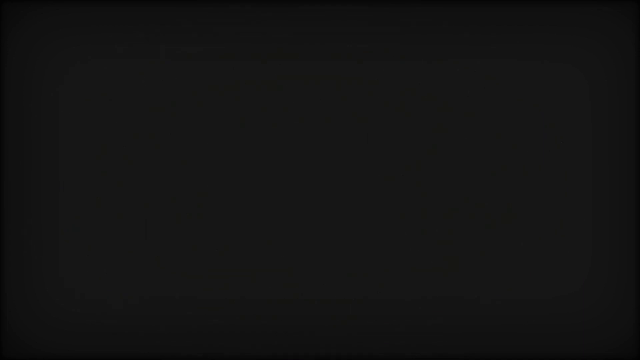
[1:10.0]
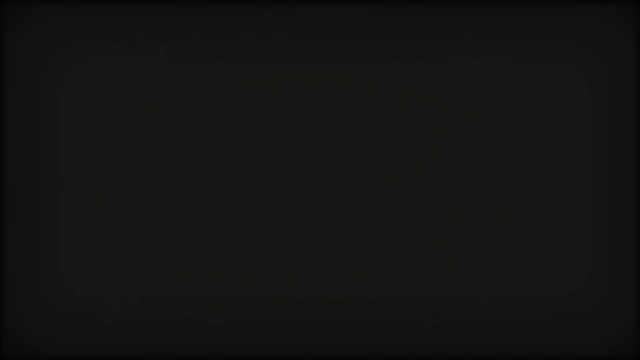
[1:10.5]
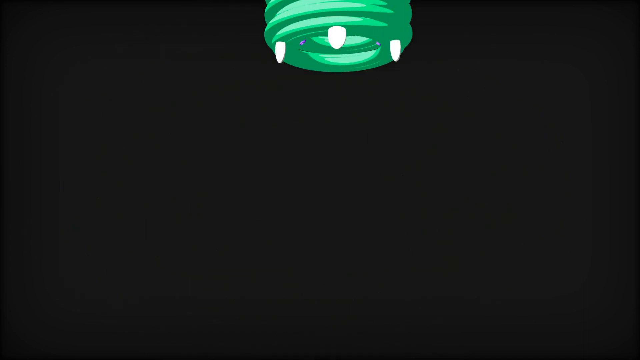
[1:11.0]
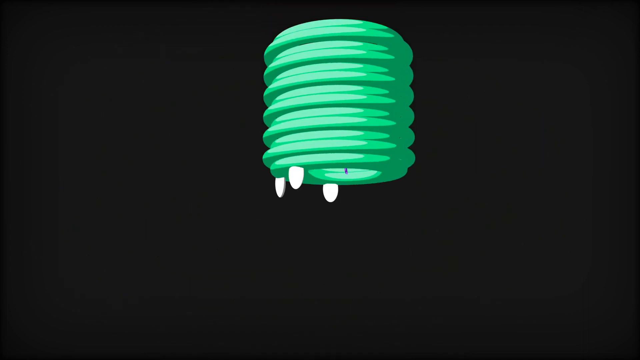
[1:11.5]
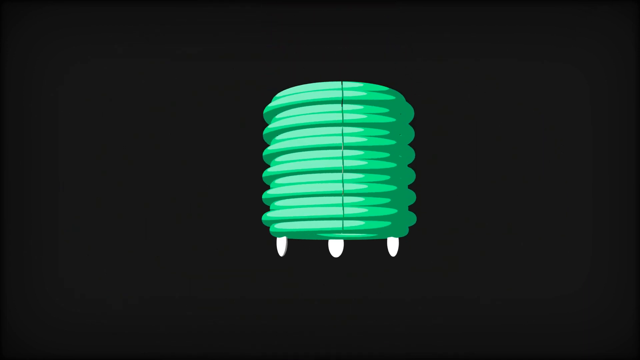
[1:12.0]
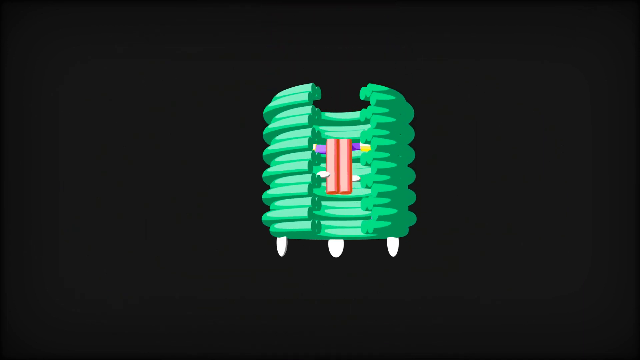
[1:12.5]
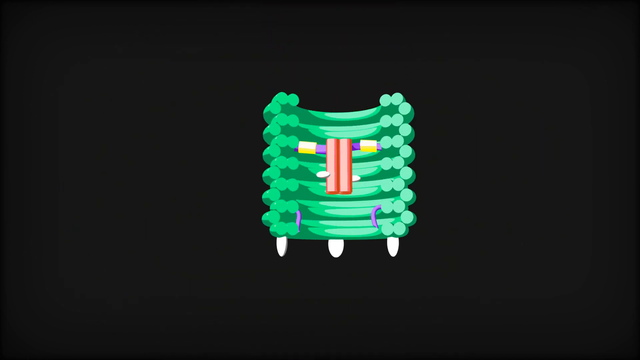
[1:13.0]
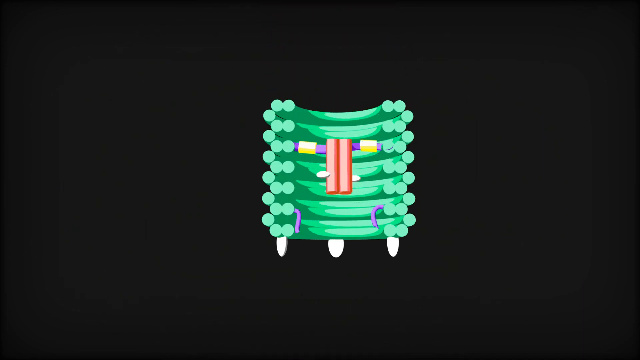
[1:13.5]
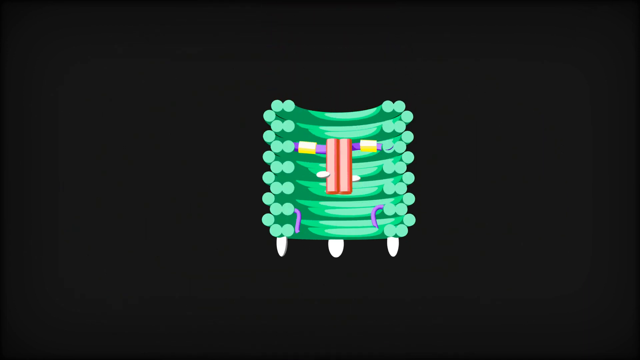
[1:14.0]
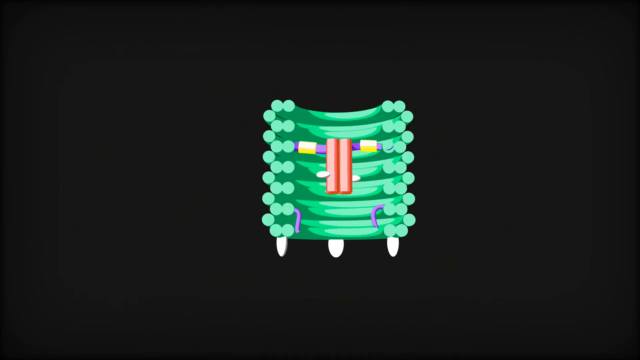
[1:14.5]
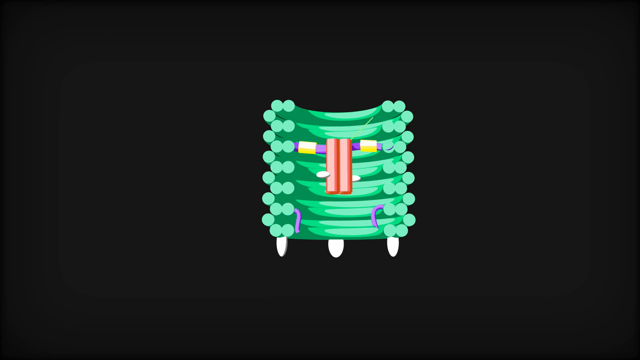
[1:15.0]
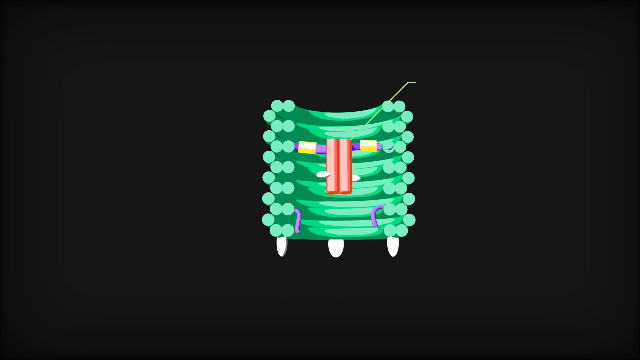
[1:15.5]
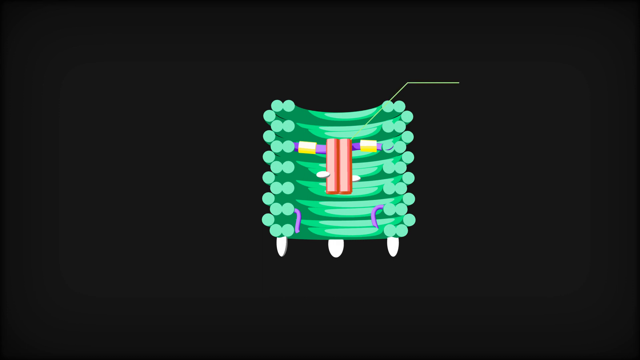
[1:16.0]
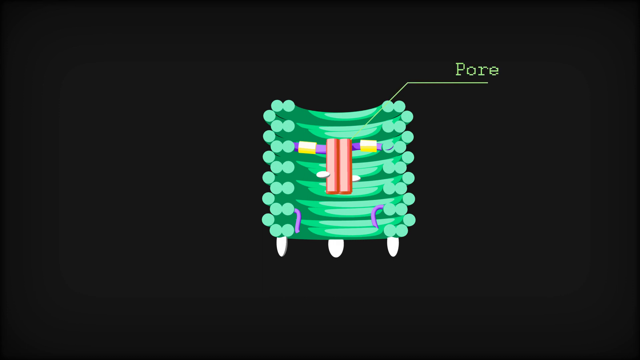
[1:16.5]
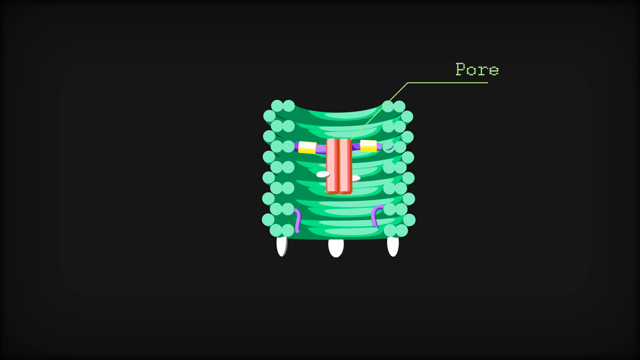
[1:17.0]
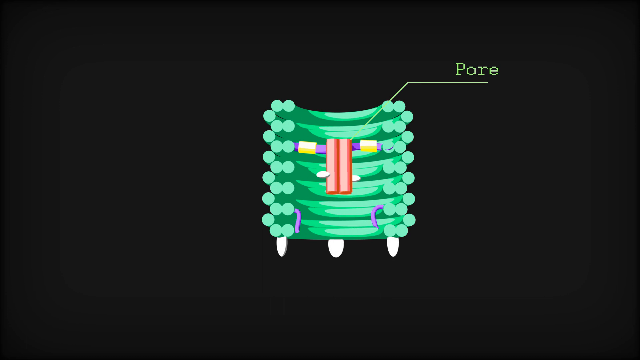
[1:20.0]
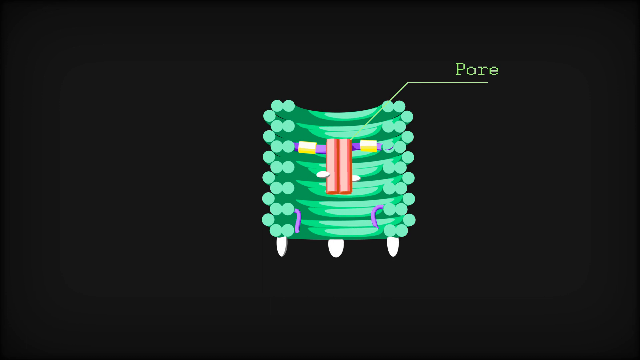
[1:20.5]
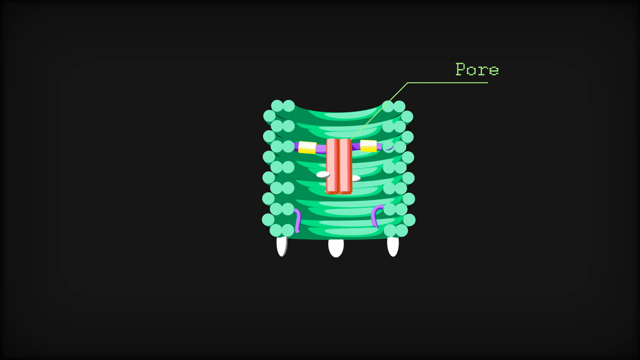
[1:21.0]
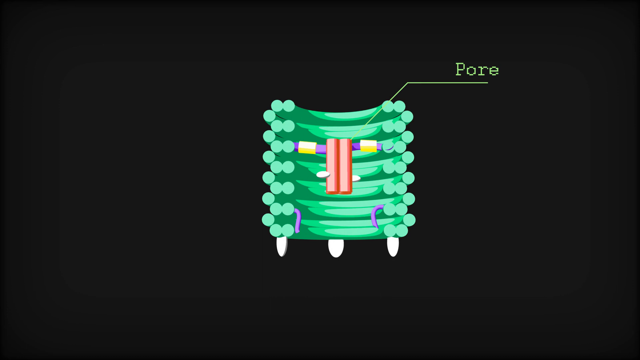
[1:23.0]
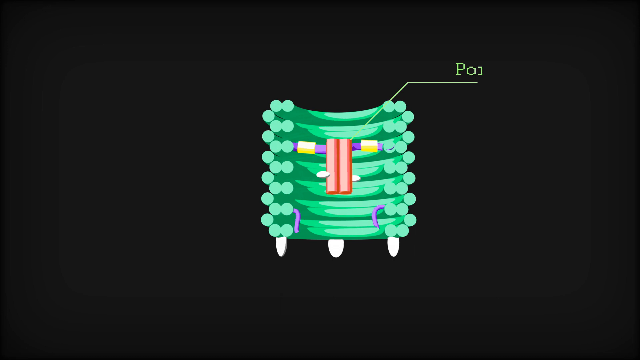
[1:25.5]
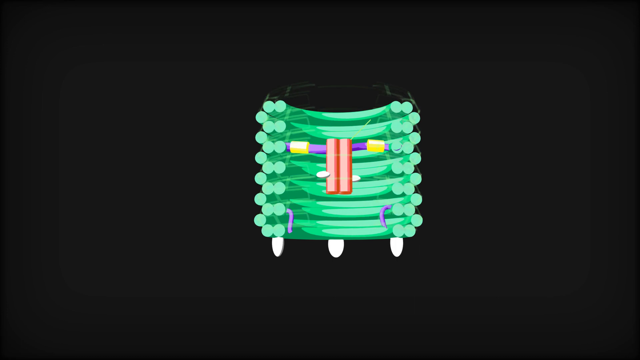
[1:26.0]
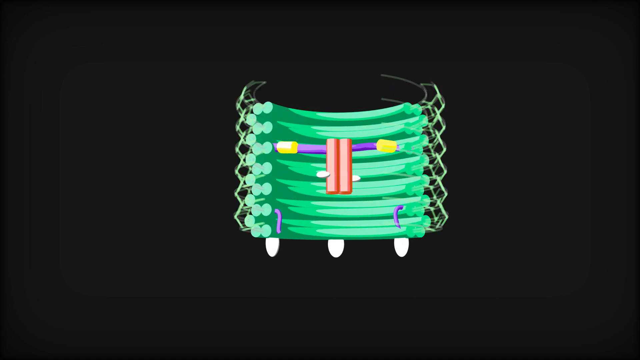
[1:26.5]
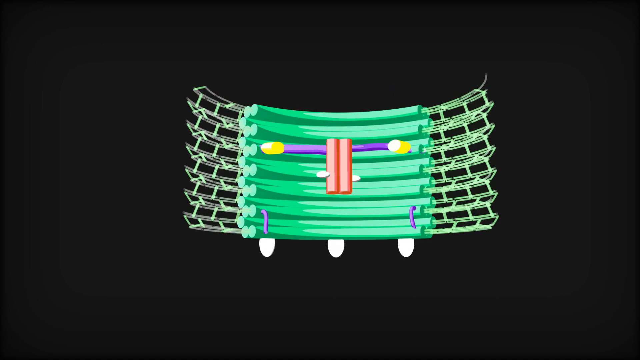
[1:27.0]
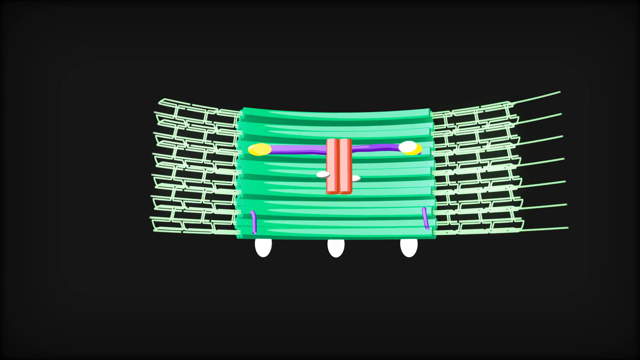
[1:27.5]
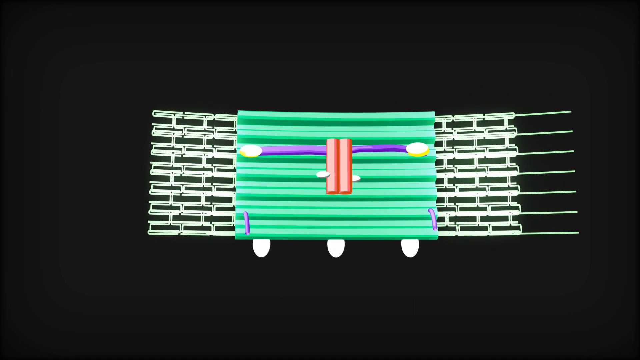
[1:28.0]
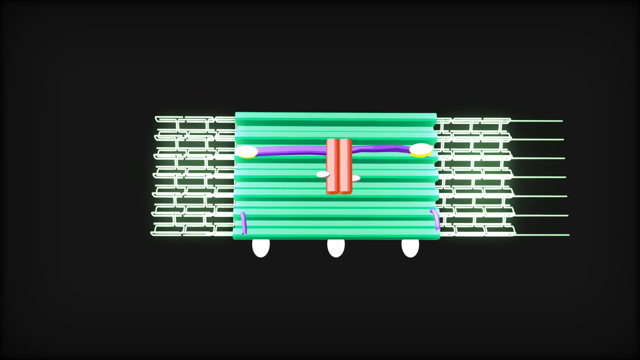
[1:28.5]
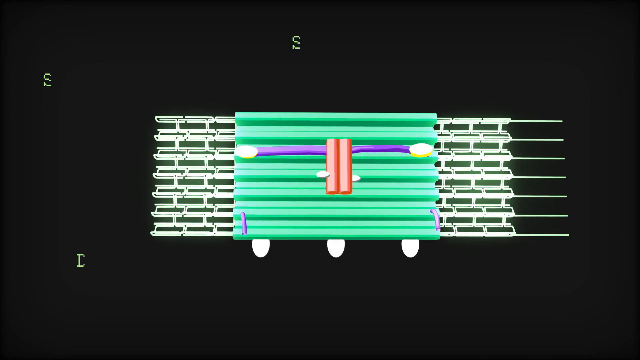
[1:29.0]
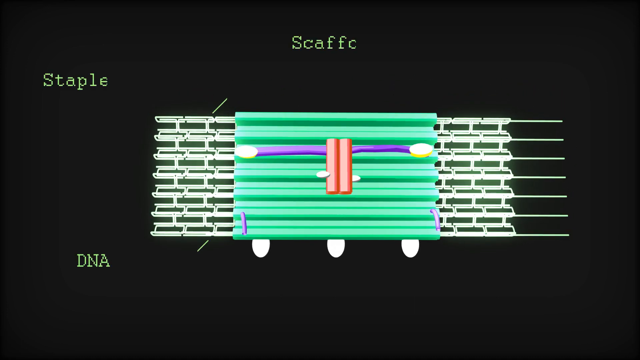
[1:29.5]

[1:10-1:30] Against a black background, a cylindrical object comes down and opens from the top, like two sliding doors opening, revealing that half of it is open. It appears hollow inside except for two pink vertical cylinders, with a yellow and purple bar across the top at the rear of the vertical cylinders. Text showing the word "poor" points to the inside of the cylinder. It then opens up further until it lies flat, and there is white scaffolding on the left and right sides, identified as scaffolding.